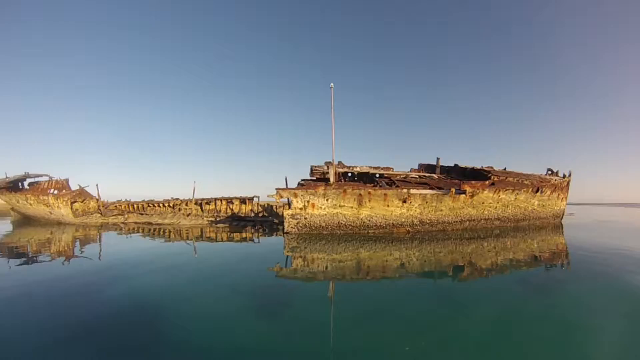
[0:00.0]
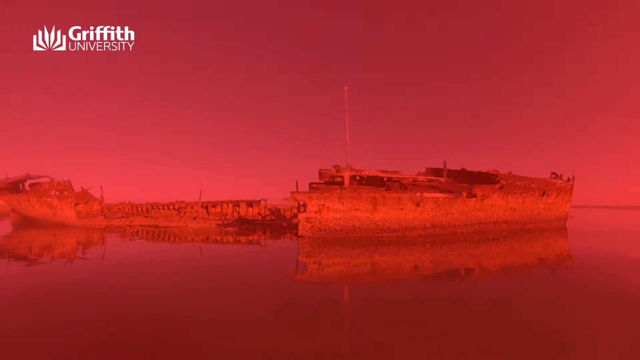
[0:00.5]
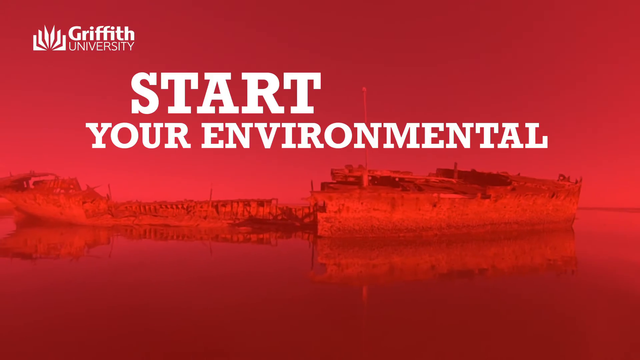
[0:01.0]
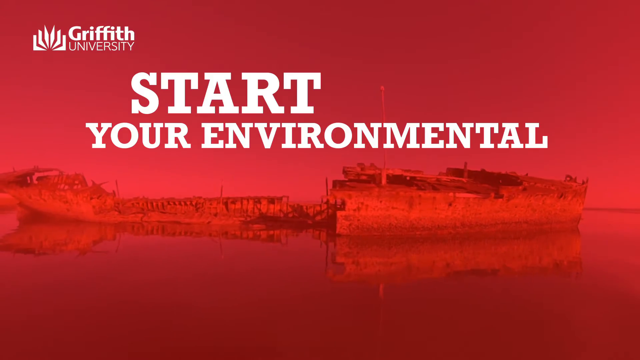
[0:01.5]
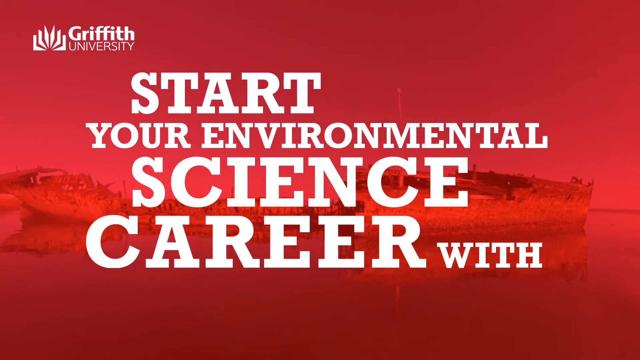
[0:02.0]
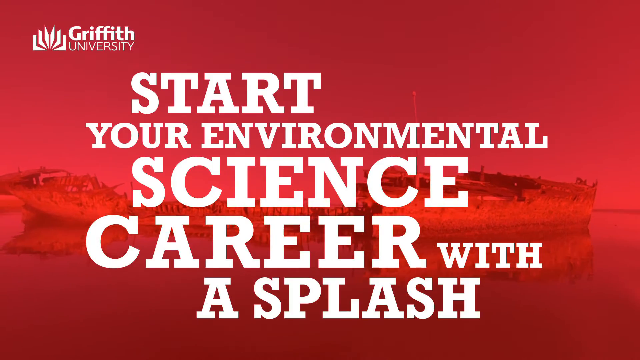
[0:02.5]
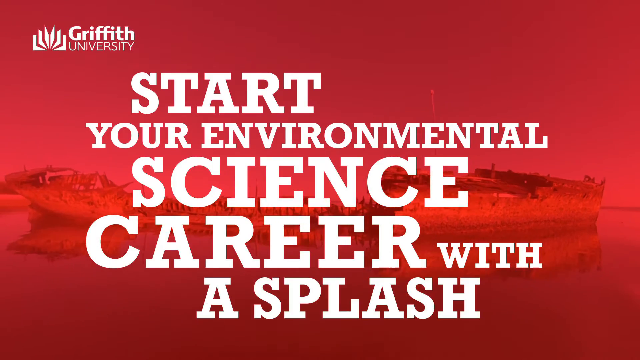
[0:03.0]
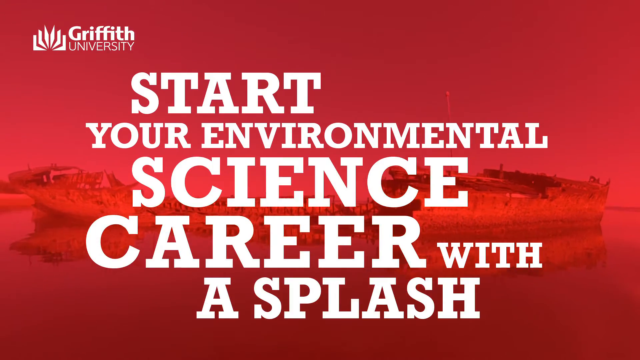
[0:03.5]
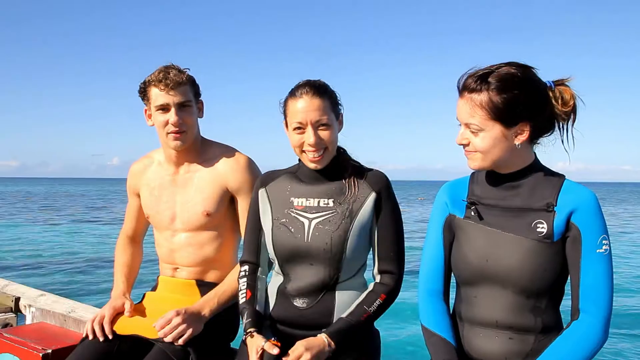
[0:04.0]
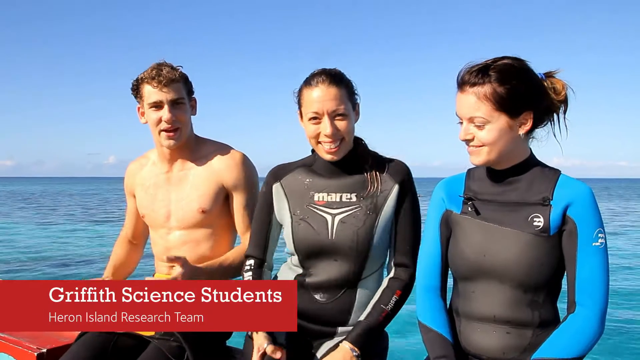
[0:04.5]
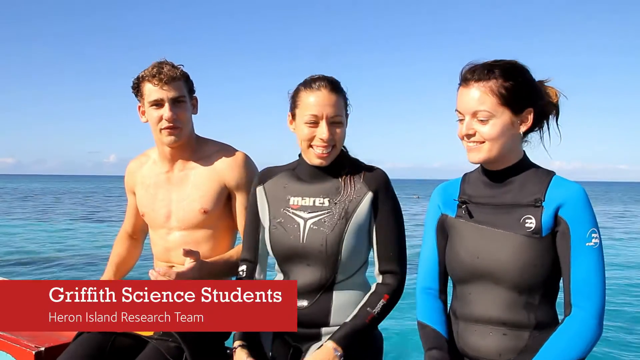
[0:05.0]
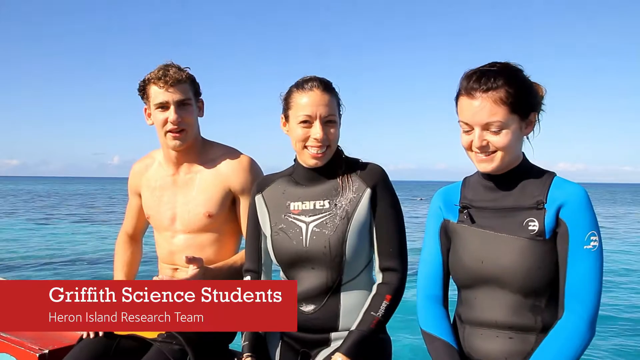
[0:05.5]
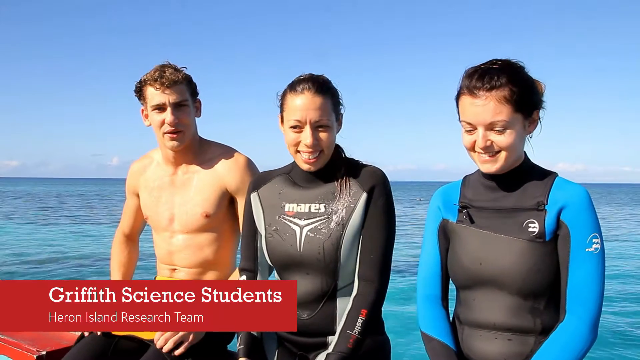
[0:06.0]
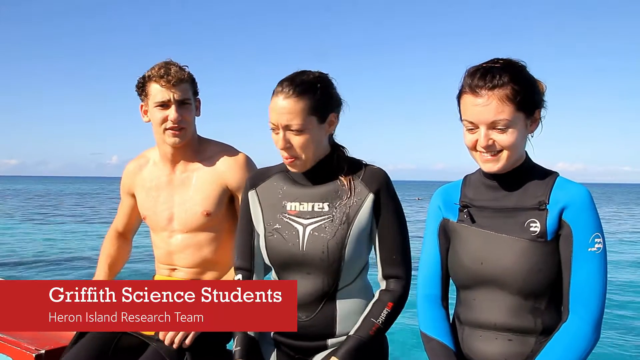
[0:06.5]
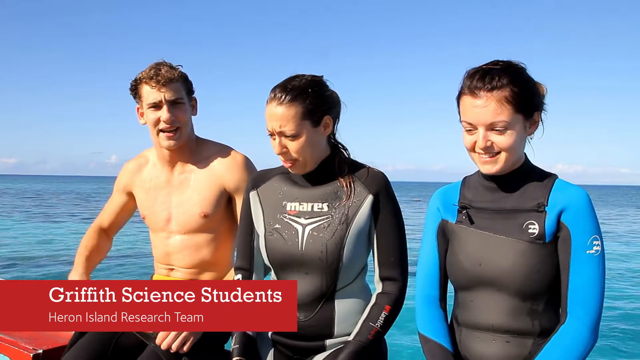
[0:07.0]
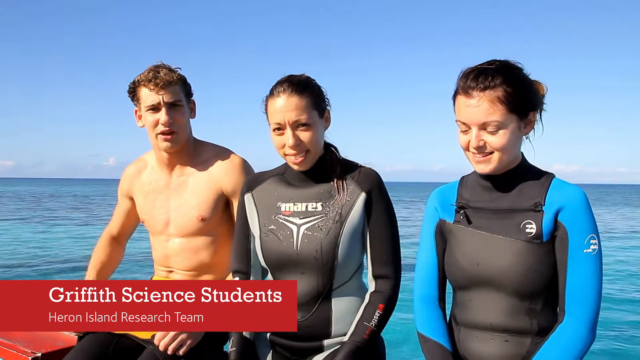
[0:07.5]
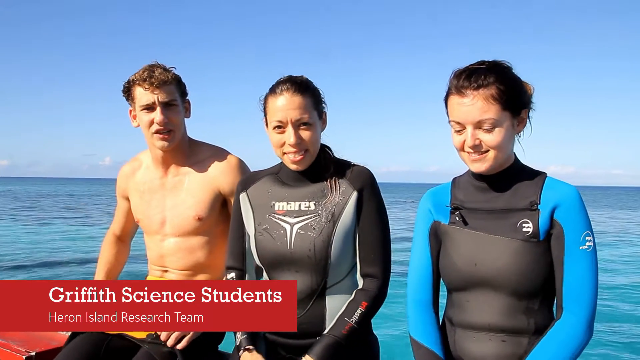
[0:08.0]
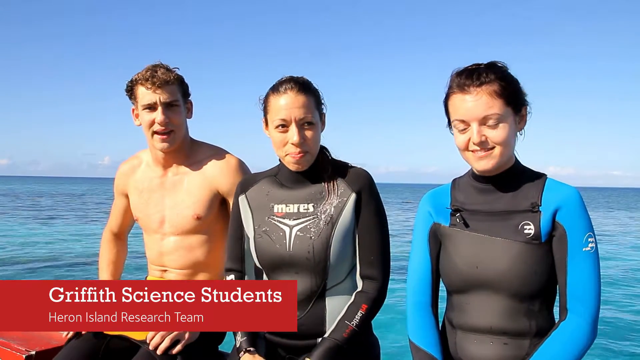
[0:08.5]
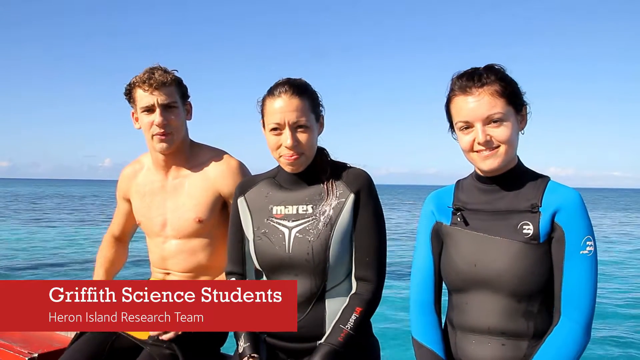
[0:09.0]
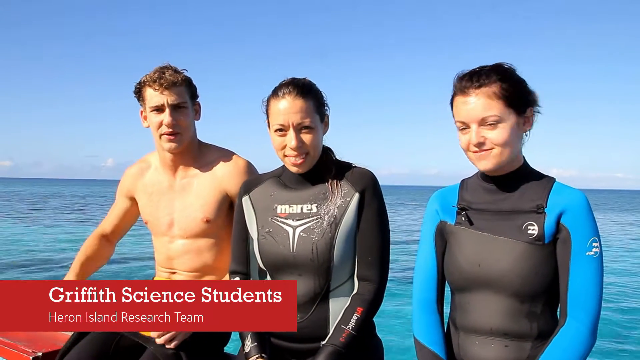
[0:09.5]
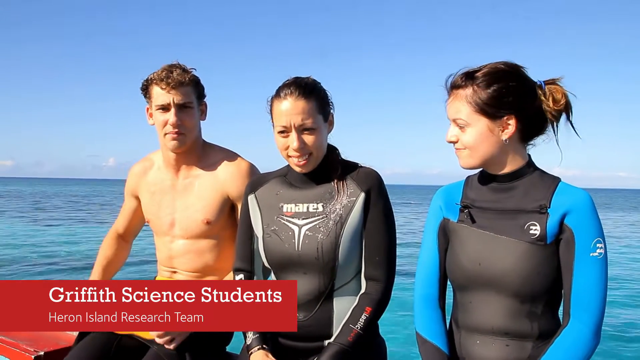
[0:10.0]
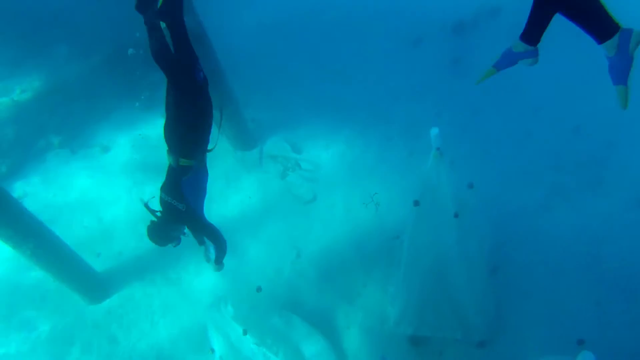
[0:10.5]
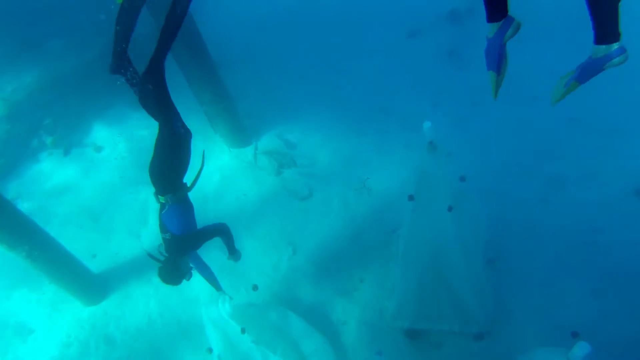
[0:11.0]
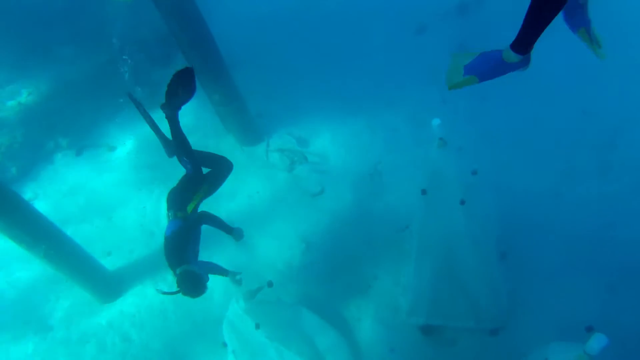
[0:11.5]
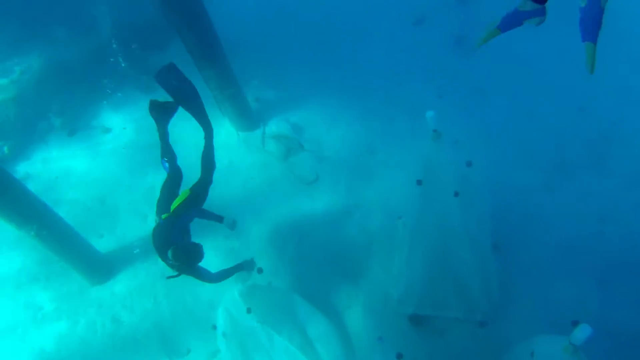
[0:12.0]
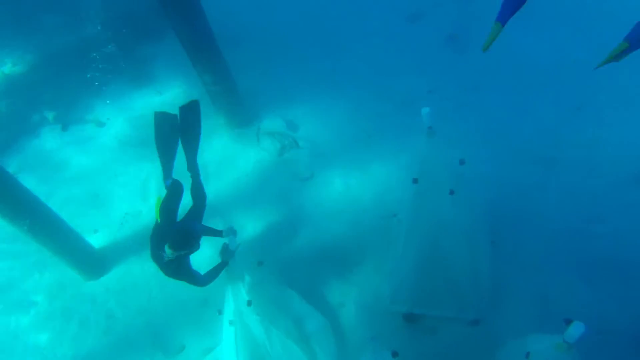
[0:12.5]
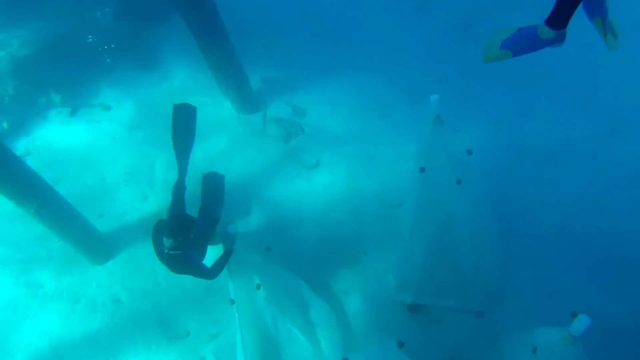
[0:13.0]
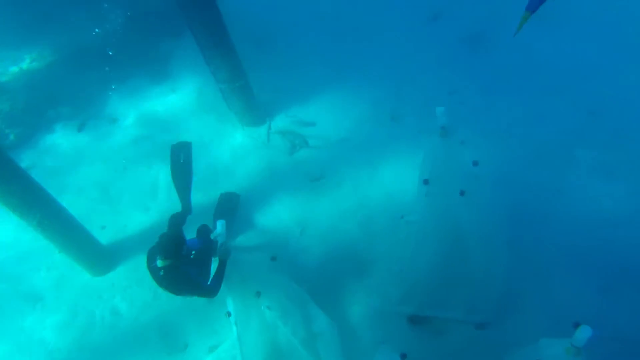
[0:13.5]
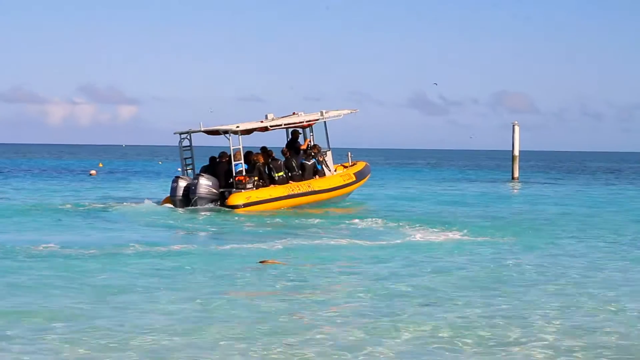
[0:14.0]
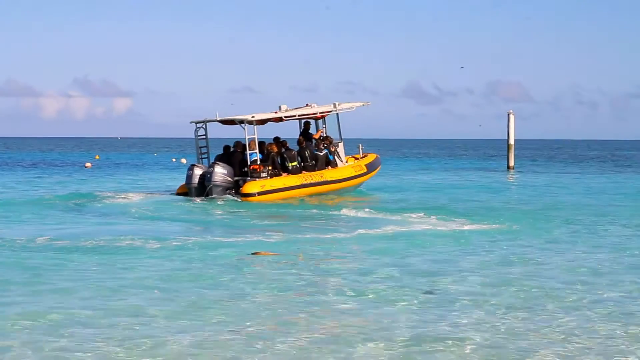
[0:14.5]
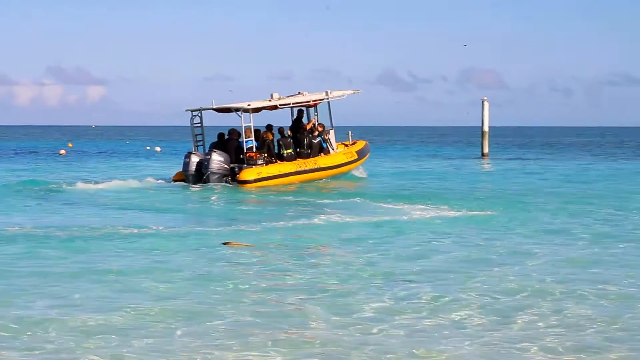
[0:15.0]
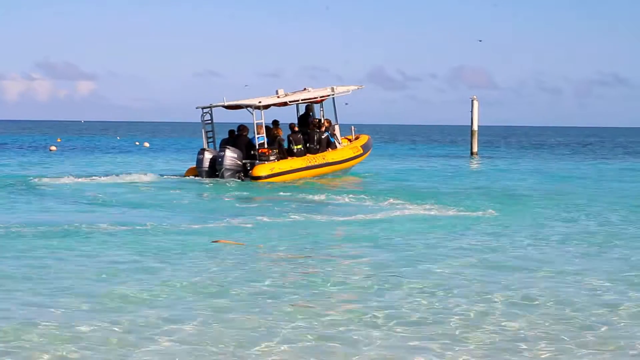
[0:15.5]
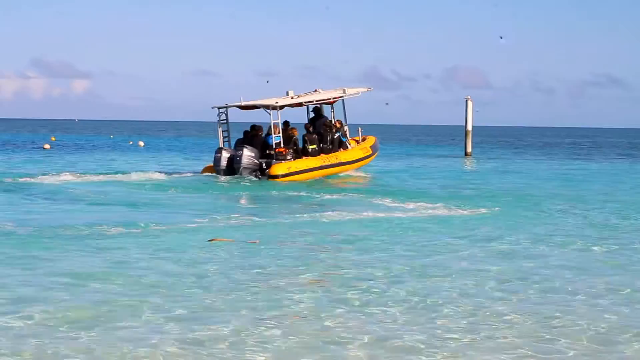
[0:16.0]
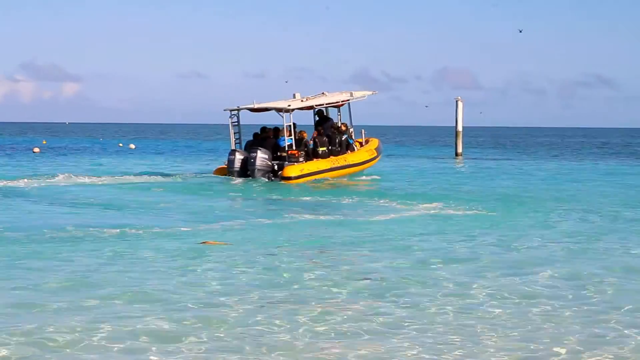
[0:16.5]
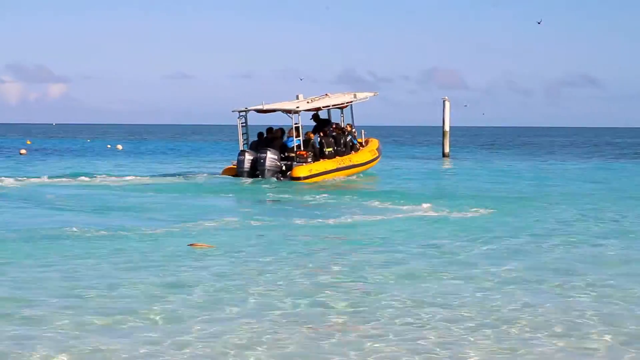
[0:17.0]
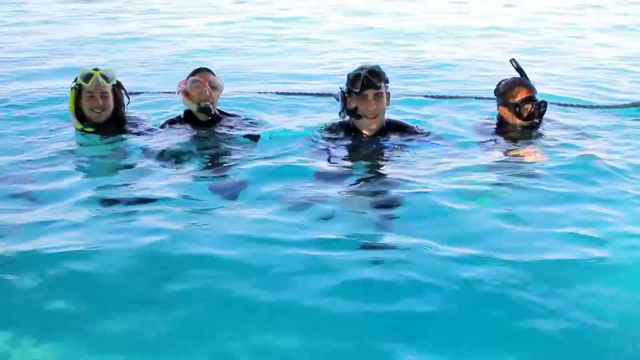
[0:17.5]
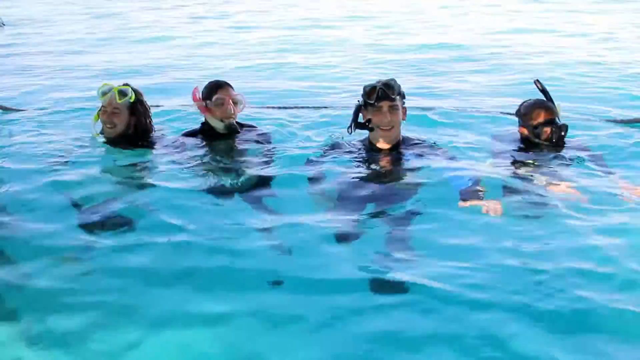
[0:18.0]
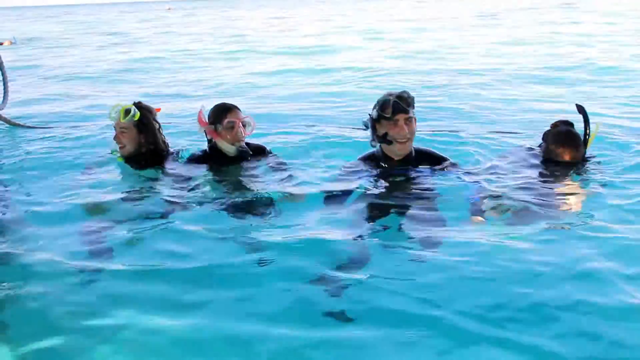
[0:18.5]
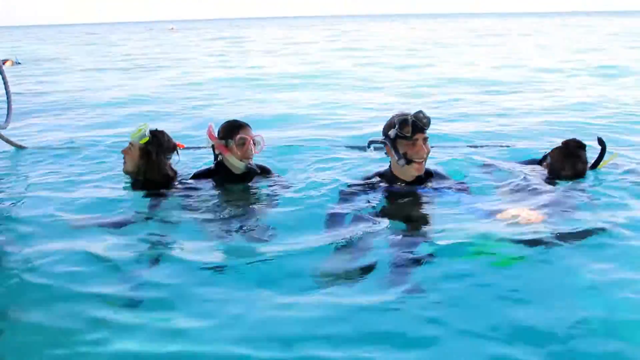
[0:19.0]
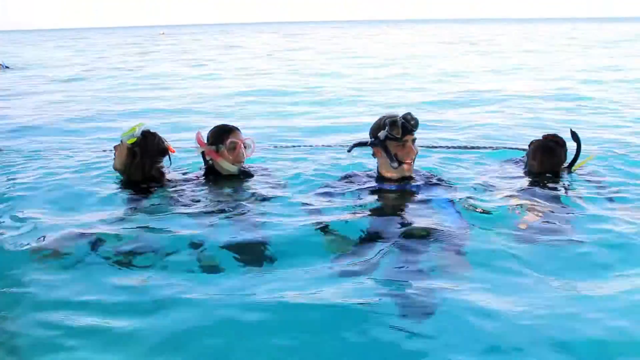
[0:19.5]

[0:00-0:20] The video moves through a series of transitions. It opens on what looks like an abandoned ship or a couple of ships afloat on turquoise, teal-ish blue water. After the first second the video turns red, and the wording "start your environmental science career with a splash" appears with Griffith University and an opening book logo in the top left-hand side, the logo showing four pages facing upward and a bookend on each side, also facing upward. Next, three Griffith science students appear, labelled by a large red box in the bottom left-hand corner with white writing that also says "Huron Island Research Team". One of the students is male and two are female, dressed in wetsuits. The students are shown talking, then scuba diving at the bottom of the sea, and then being taken out on a small boat ride into the sea. Another shot shows four students with snorkel gear in a water area with a black line, looking around and treading water as the camera pans.